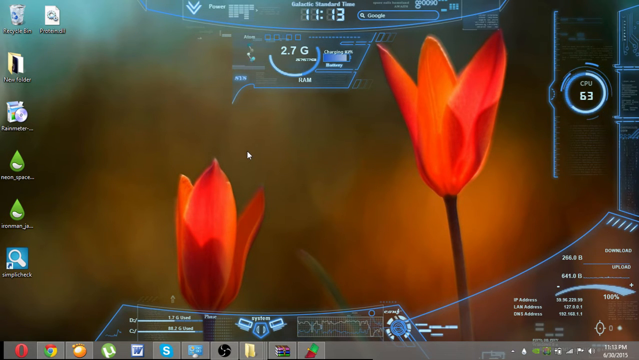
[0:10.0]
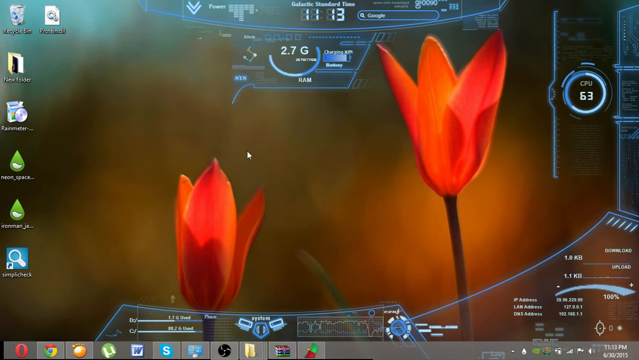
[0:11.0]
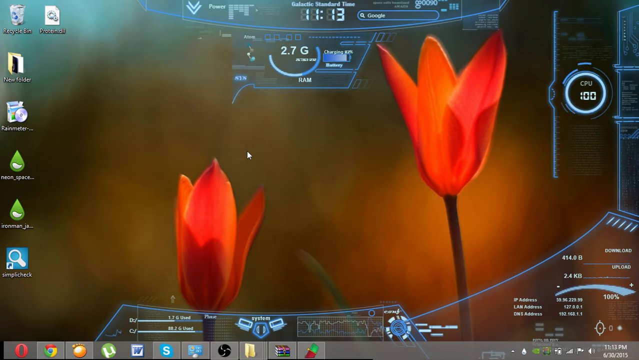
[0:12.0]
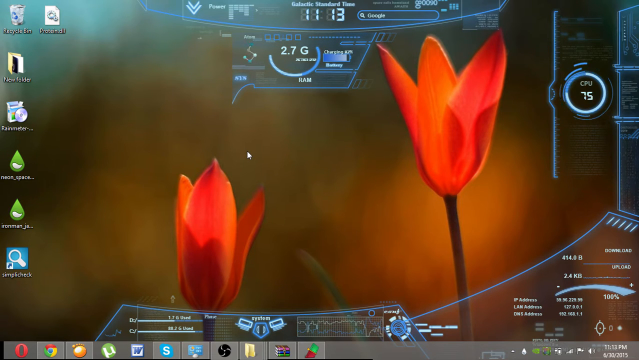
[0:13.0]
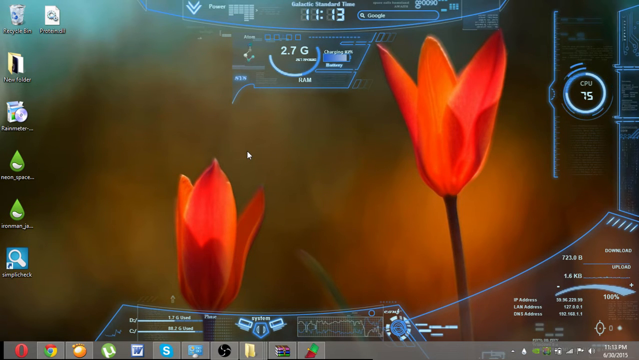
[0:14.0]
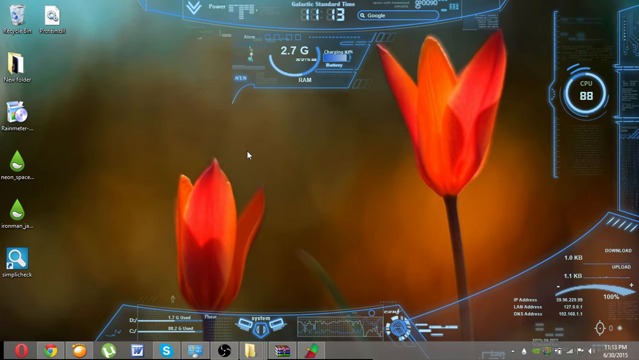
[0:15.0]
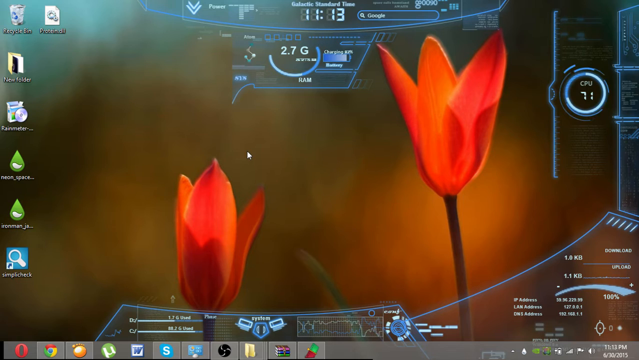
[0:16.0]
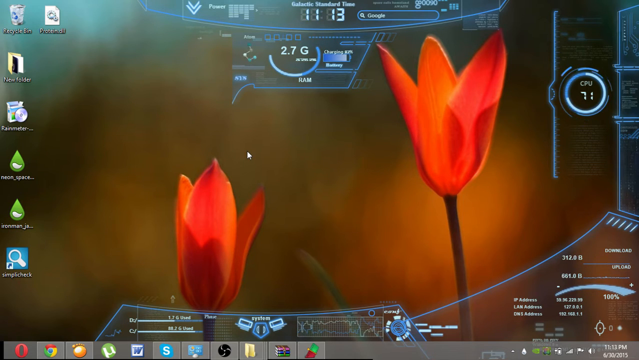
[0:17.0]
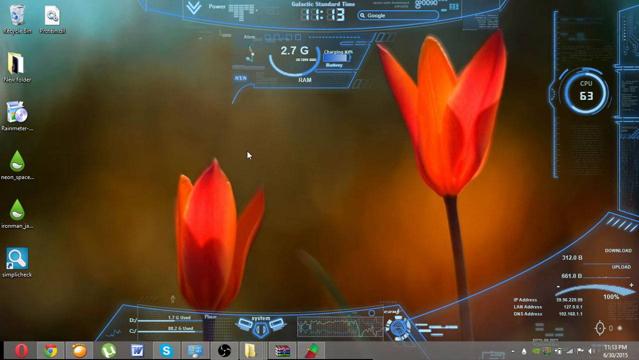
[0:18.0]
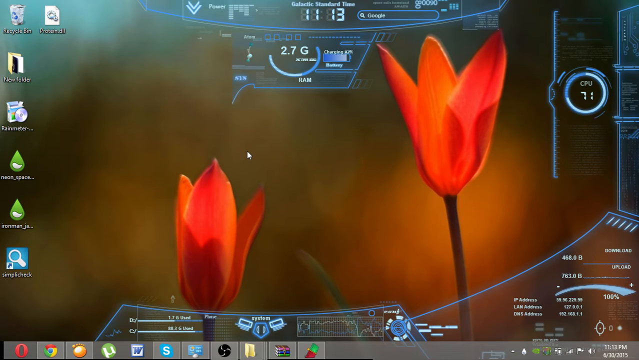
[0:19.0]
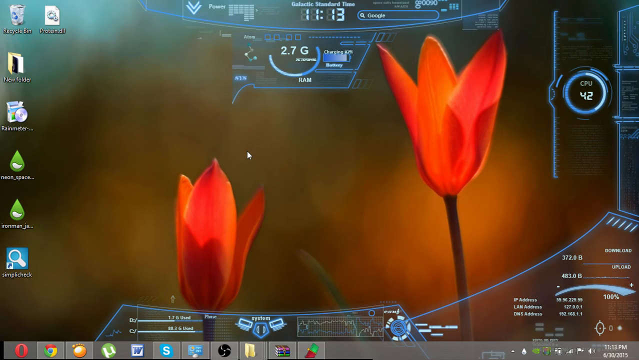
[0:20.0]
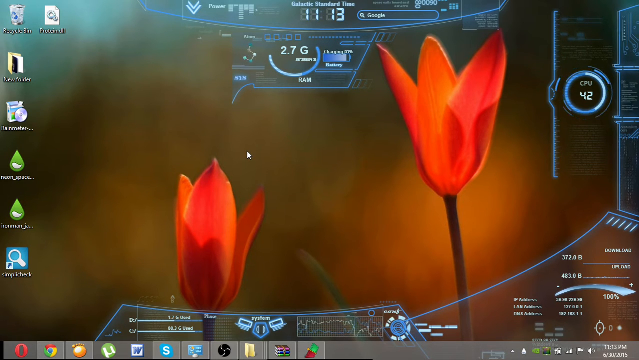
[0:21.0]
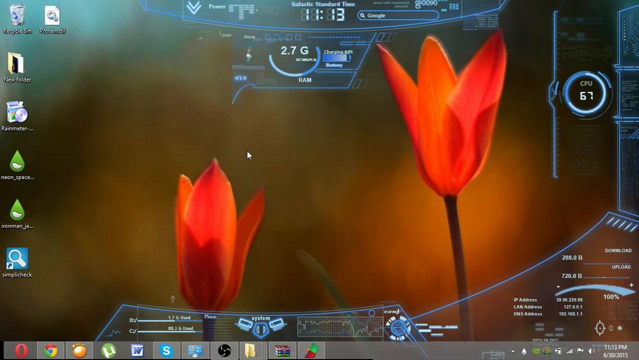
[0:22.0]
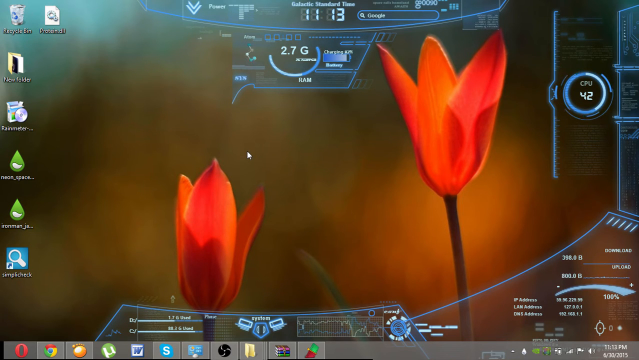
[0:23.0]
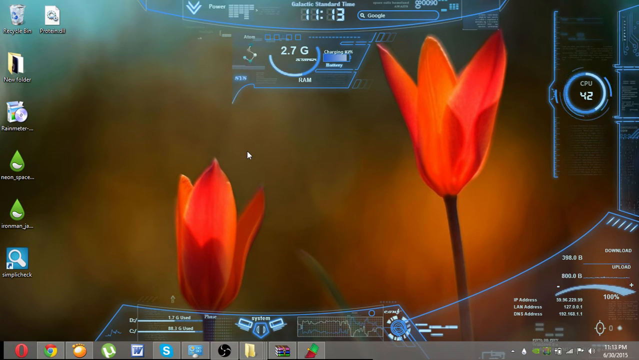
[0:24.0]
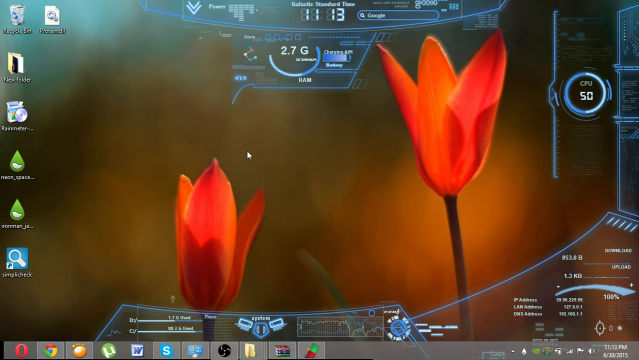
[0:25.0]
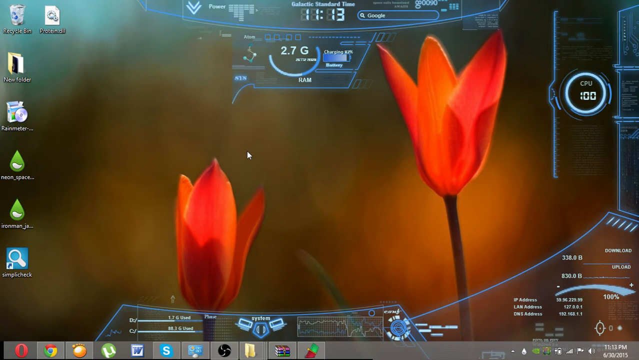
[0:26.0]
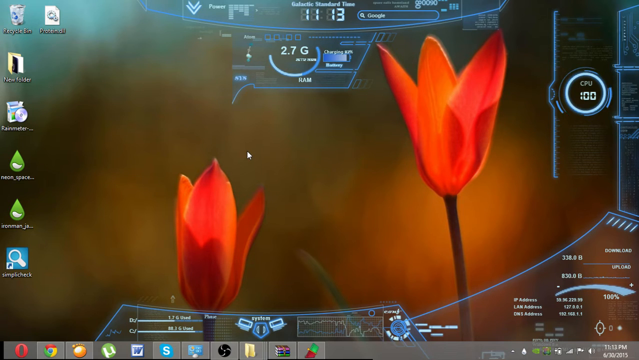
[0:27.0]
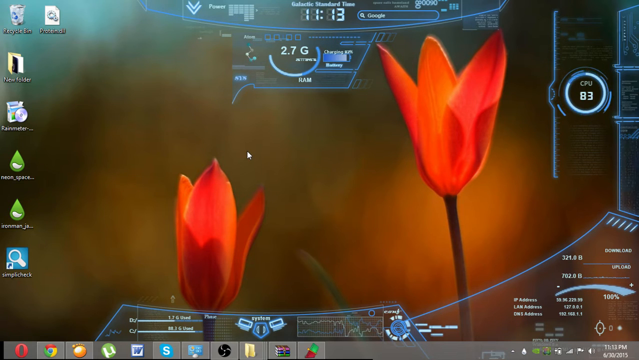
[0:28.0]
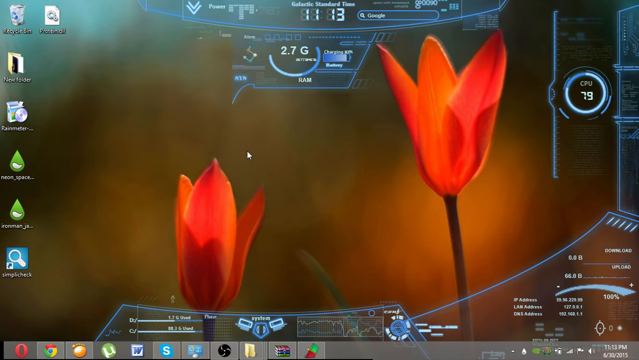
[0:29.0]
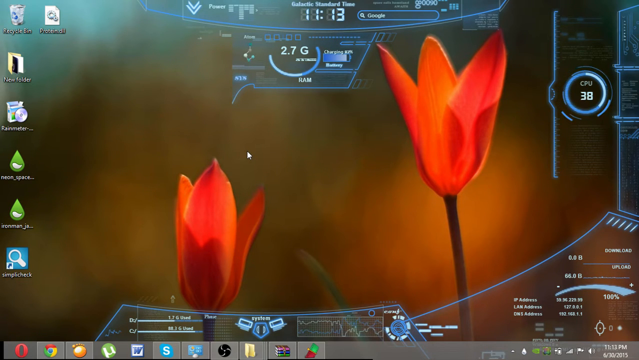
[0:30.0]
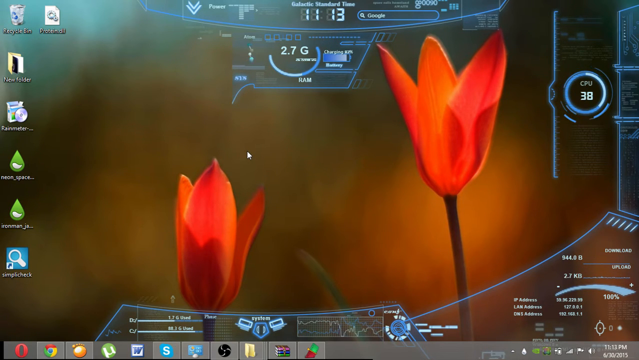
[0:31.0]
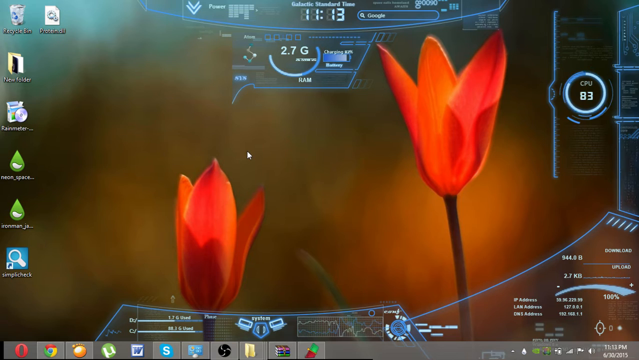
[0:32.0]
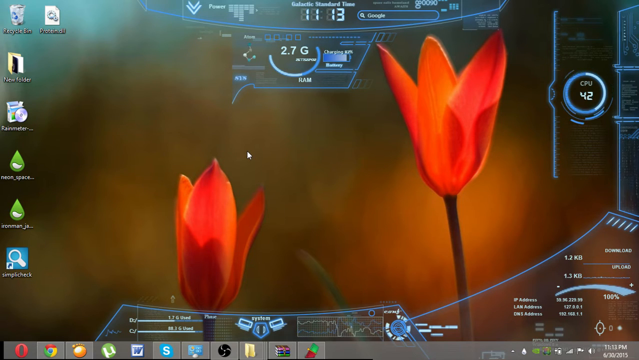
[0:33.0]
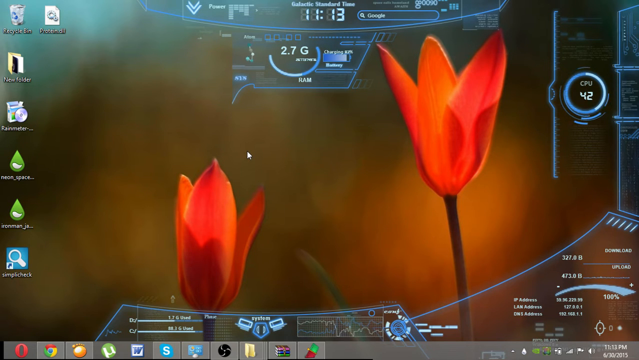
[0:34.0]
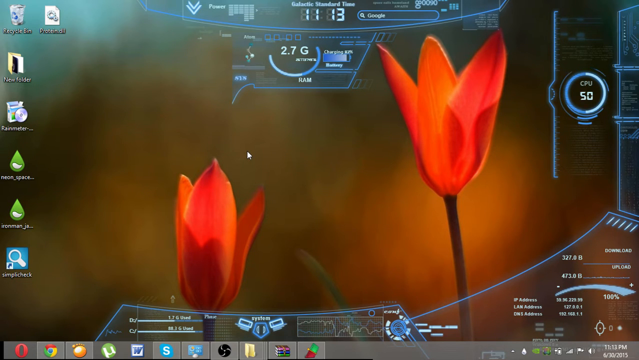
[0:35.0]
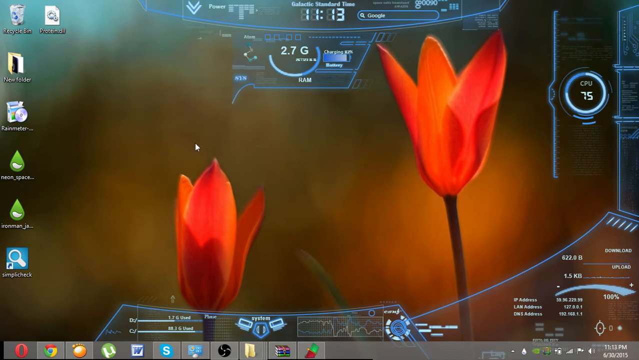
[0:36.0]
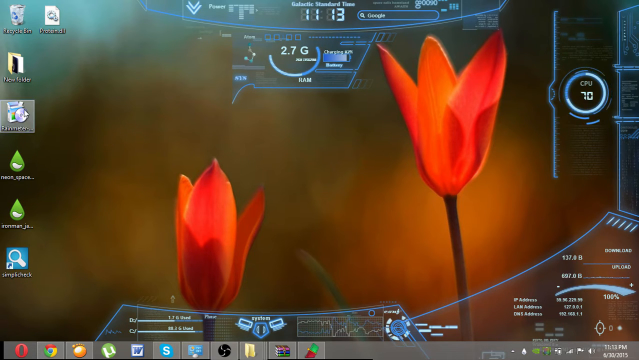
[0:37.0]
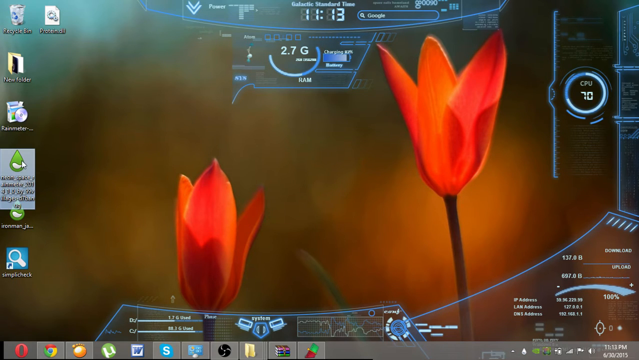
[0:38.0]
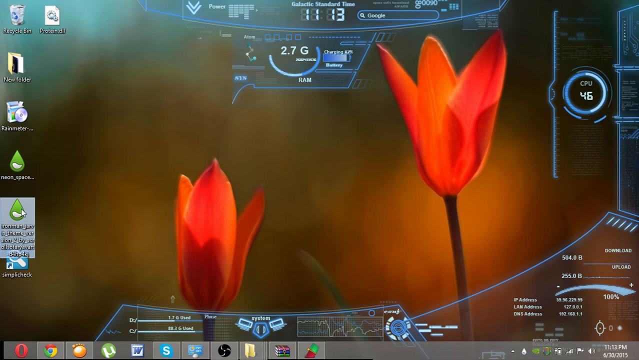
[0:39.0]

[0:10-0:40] A desktop screen is shown with a background of an artistic image of two orange tulips. It is a standard Windows desktop with various items on it, including seven icons, and various items in the taskbar, including the Chrome and Opera web browsers. The image remains fairly unchanged apart from widgets on the desktop showing the processor running at 2.7 GHz, the current time as 11.13, and CPU utilisation between 50 and 75%. The white mouse cursor then moves to the left of the screen and momentarily glides over various icons there, including one that appears to be an installation program and two icons with unreadable text that appear to be designed as green droplets of water. The mouse hovers over these icons.